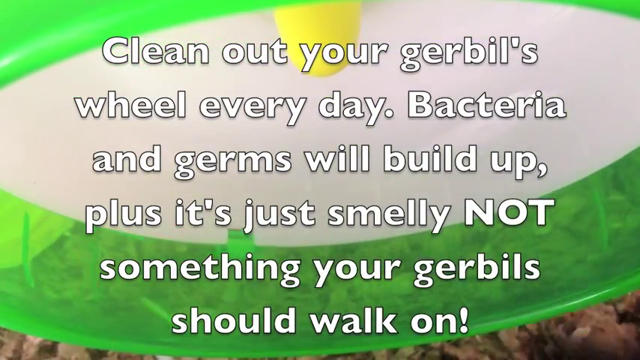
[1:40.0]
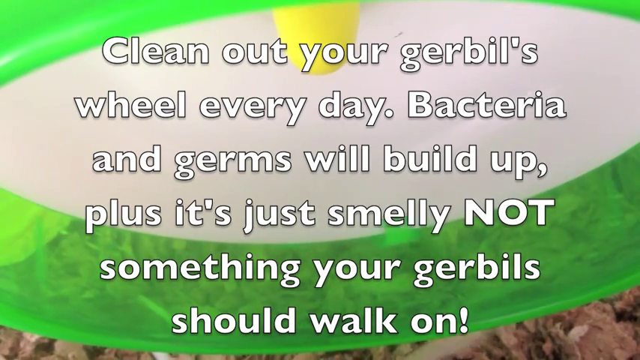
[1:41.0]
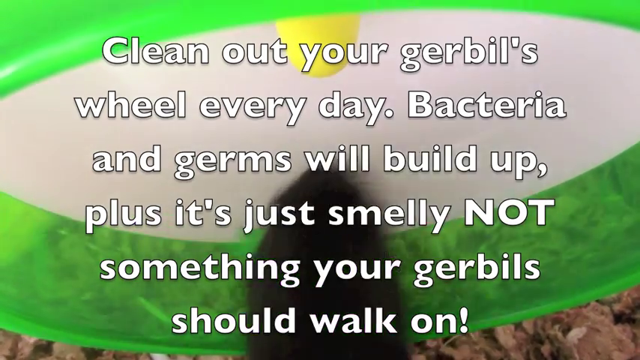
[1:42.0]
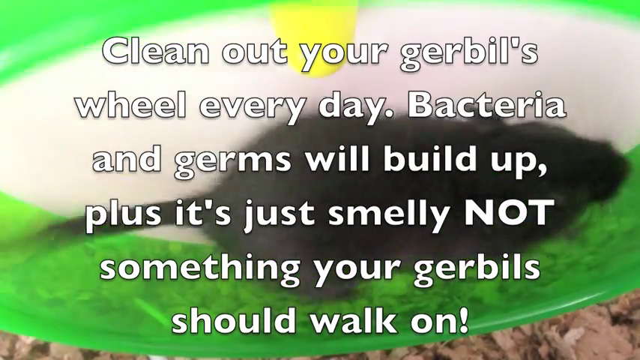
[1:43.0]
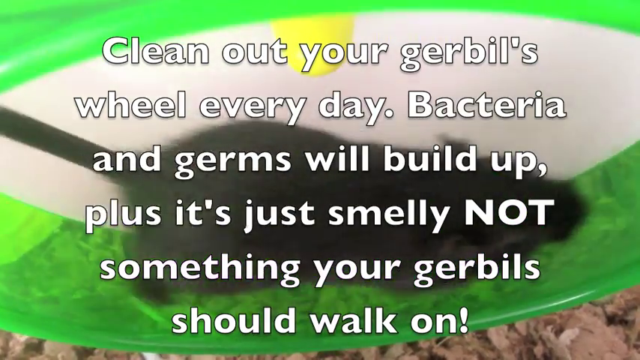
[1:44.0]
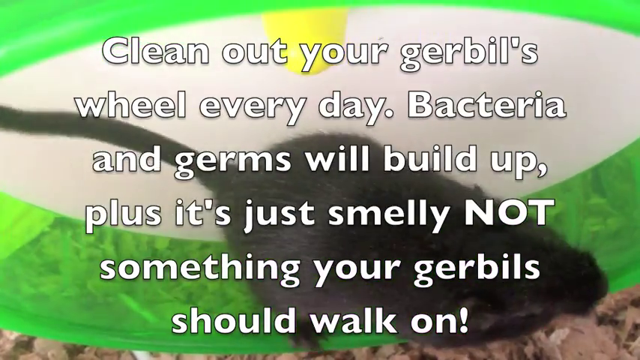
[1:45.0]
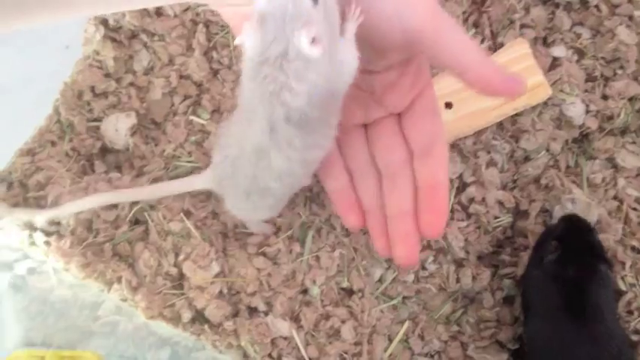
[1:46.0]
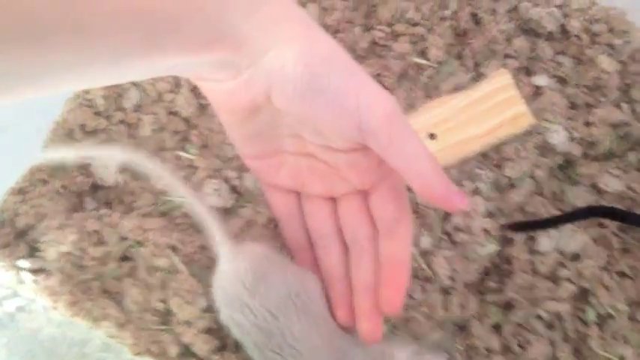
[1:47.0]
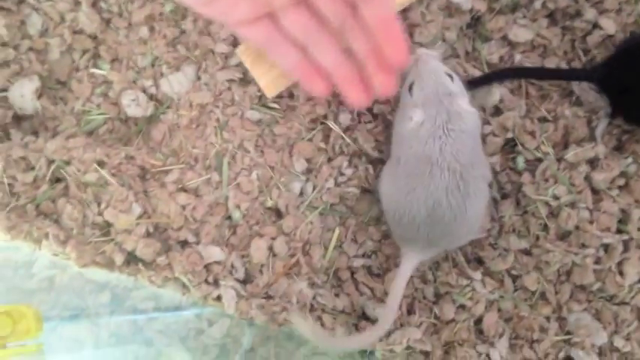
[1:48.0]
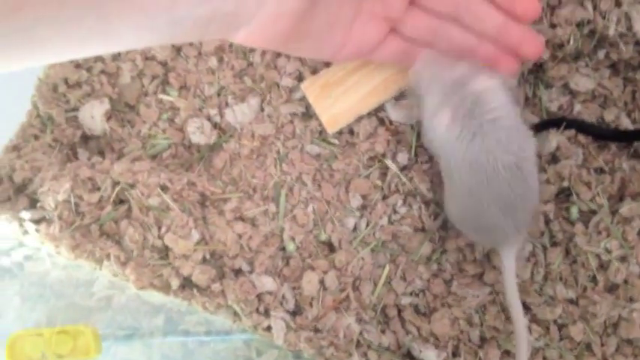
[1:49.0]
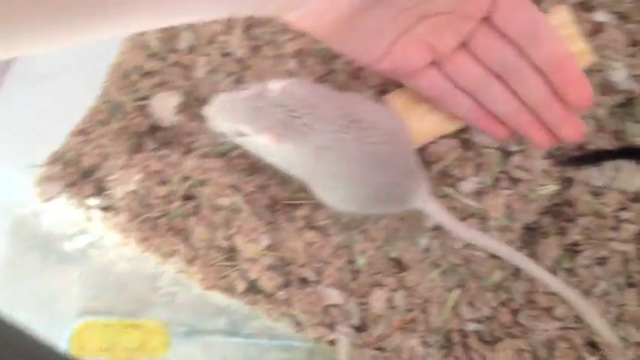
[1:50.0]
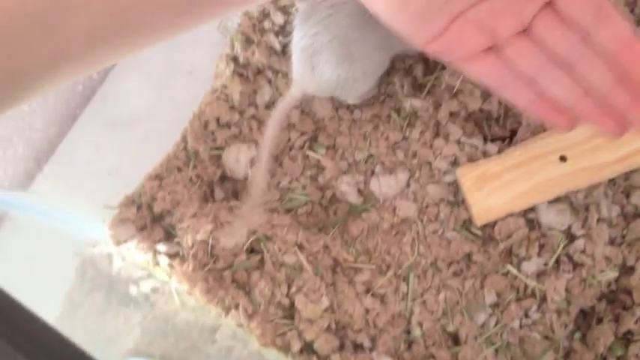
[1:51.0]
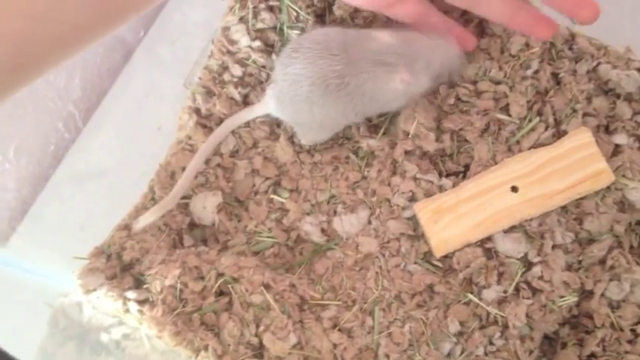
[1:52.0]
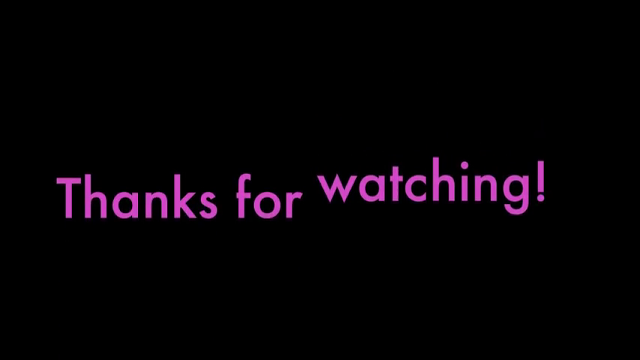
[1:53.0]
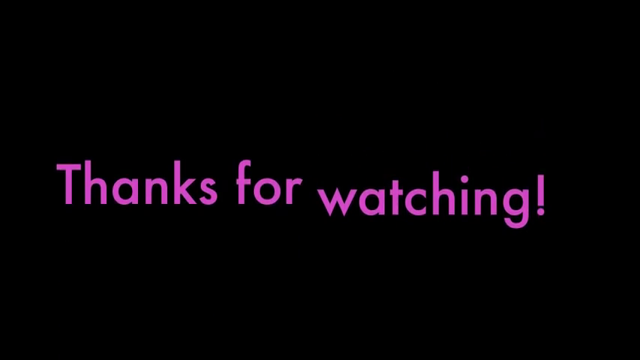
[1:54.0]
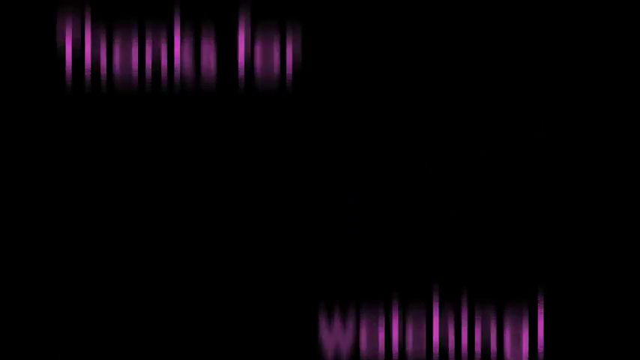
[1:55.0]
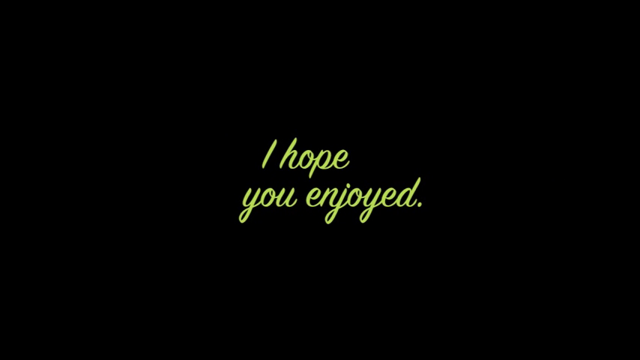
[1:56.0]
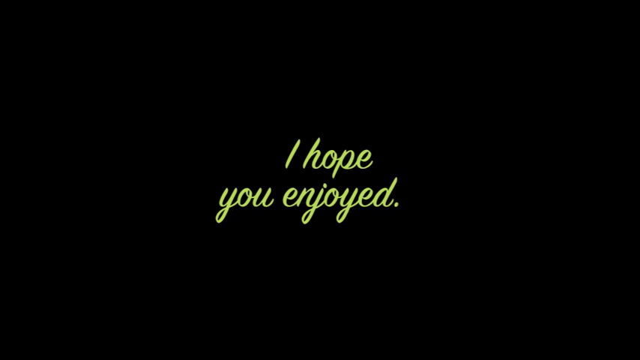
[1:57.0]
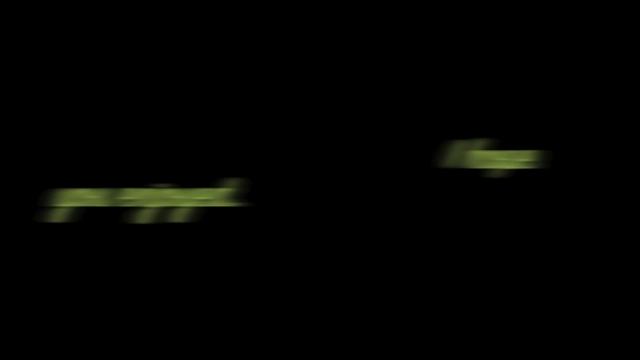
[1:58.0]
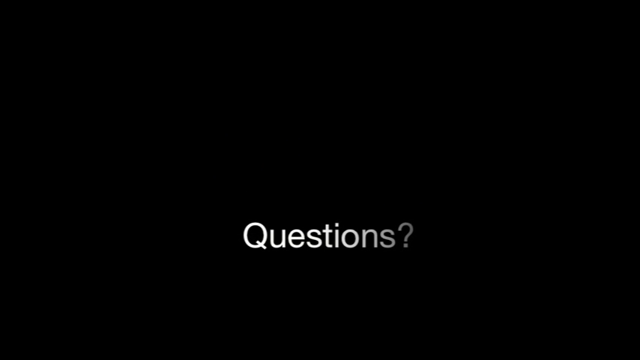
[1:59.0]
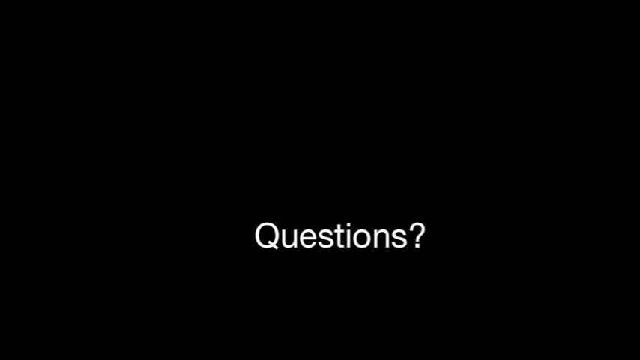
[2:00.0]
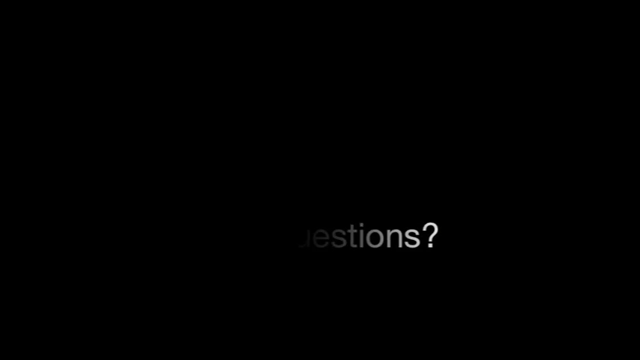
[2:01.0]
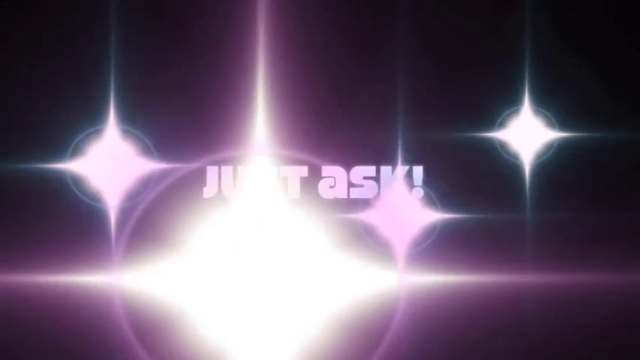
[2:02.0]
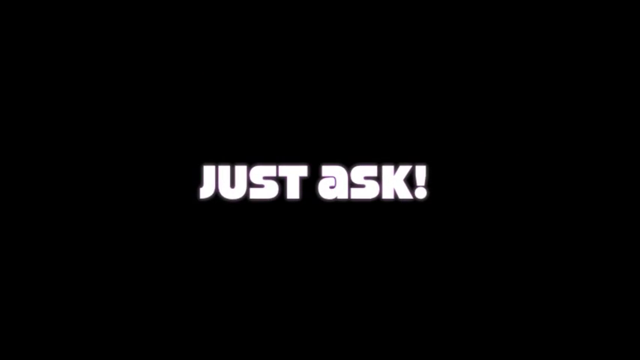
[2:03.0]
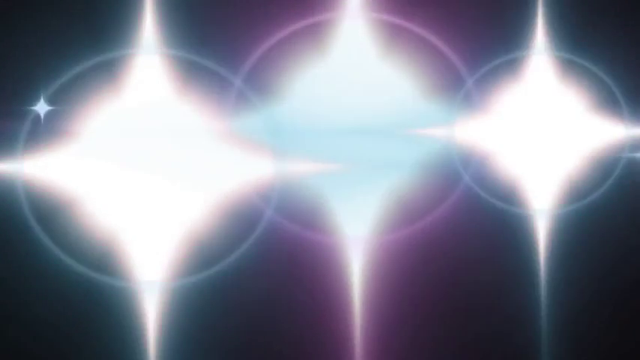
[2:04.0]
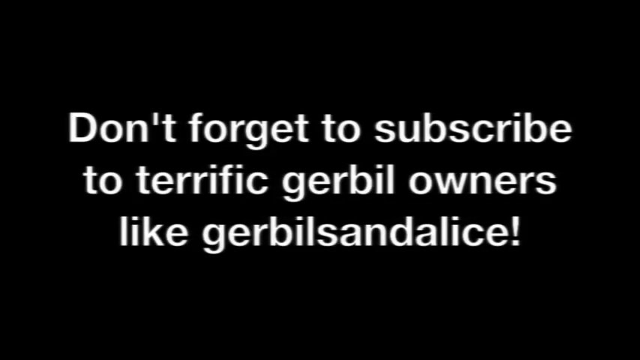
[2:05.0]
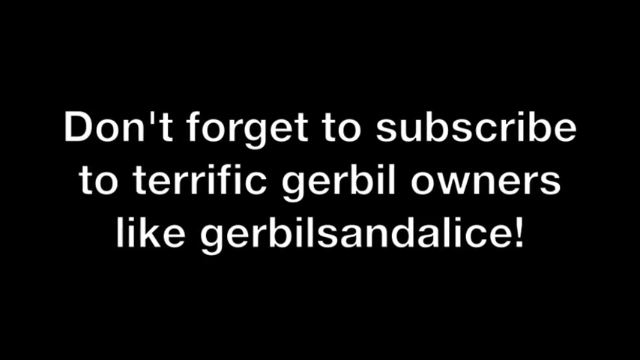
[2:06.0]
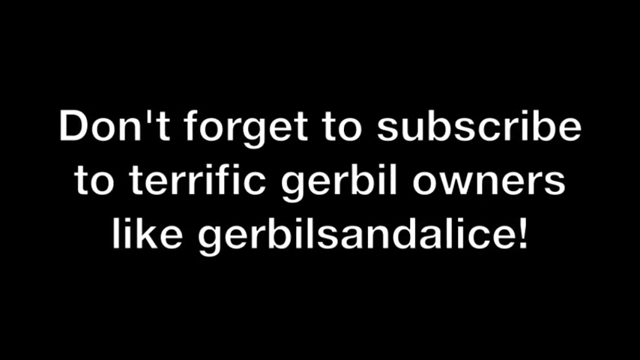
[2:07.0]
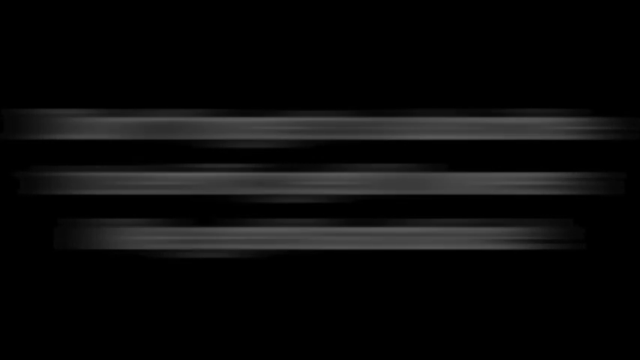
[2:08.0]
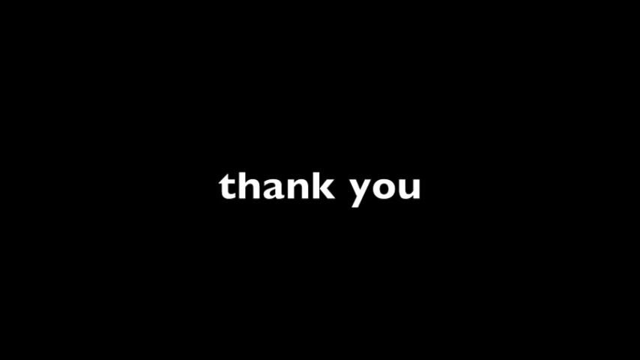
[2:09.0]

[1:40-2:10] The warning about cleaning the gerbil's wheel is still shown. In the background is the black gerbil, facing the right of the screen; it starts running, and the wheel moves slowly. The video cuts to a shot from above the enclosure: a white hand is inside the enclosure, and the grey gerbil is sitting in the hand. It moves and runs underneath the hand, and at the top right of the screen the back end of the black gerbil is visible underneath the hand. The bit of wood they have been gnawing on is visible. The grey gerbil turns, puts its front paws on the hand, then jumps off and moves under the hand. The screen goes black and pink writing appears in the middle: the first two words come up from the bottom of the screen and stop in the centre, and the last word drops from the top and settles in the centre, spelling out "thanks for watching!" The words carry on in the directions they came from, slowly at first, then speed up and disappear off the screen. Yellow italic writing then appears in the middle of the screen reading "I hope you enjoyed"; the bottom line of text disappears to the left side of the screen and the top line to the right. The letter Q starts to appear, and as the black disappears the word "questions?" is shown in white writing. It disappears, stars appear across the screen and disappear, and the words "just ask!" appear in white in the middle of the screen. Stars appear across the screen again, and three lines of text appear in the middle beginning "don't forget to subscribe". This stays on the screen, then blows out, and the words "thank you" appear in the middle of the screen.